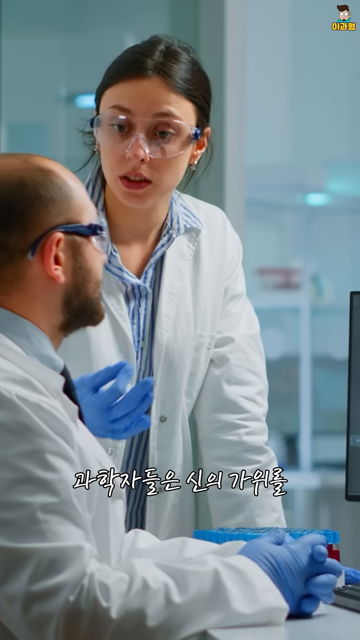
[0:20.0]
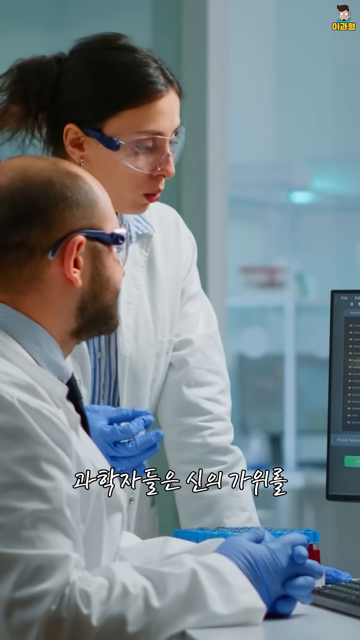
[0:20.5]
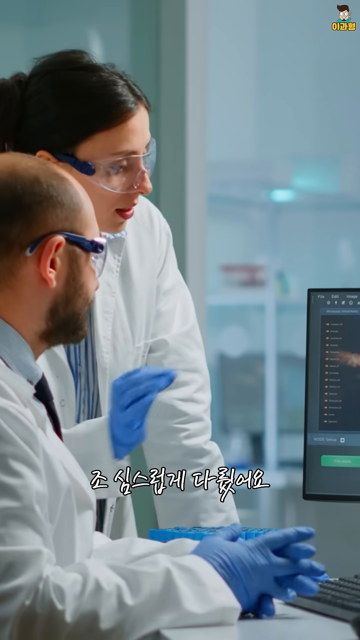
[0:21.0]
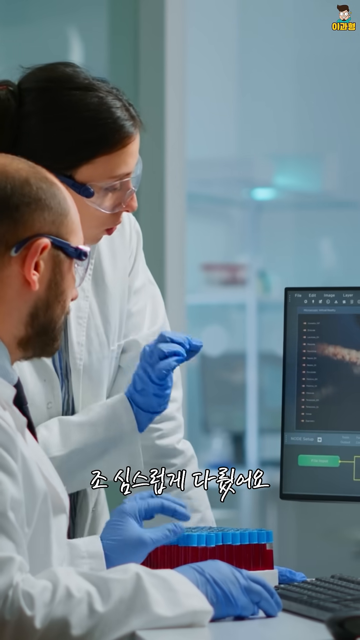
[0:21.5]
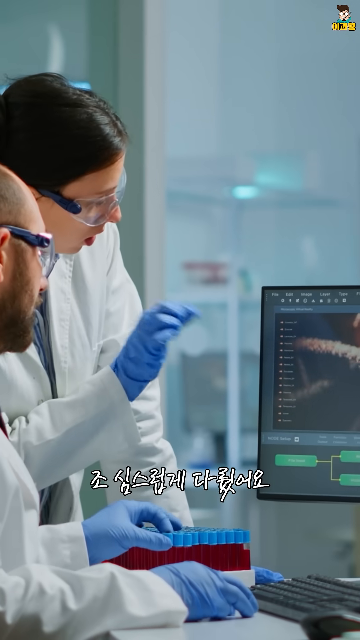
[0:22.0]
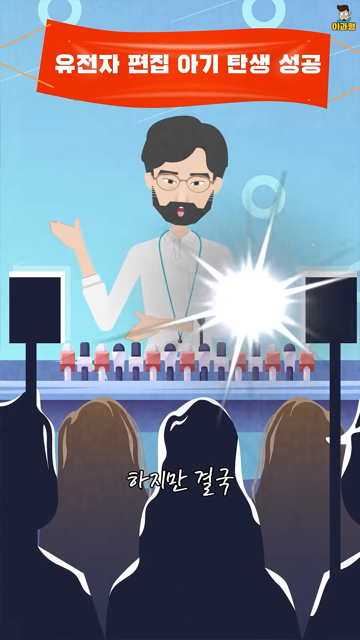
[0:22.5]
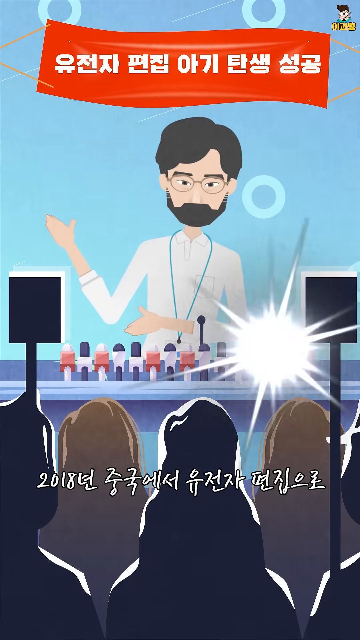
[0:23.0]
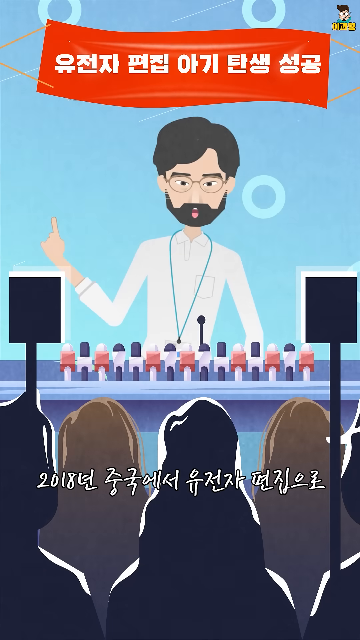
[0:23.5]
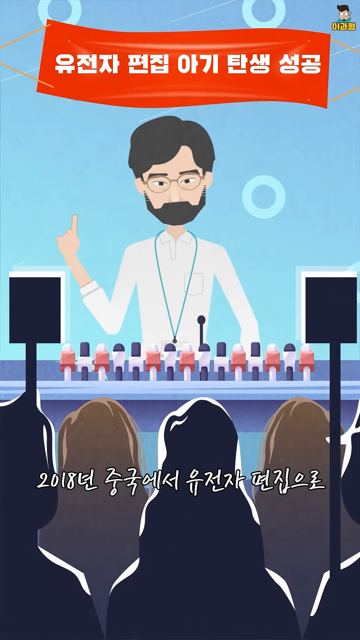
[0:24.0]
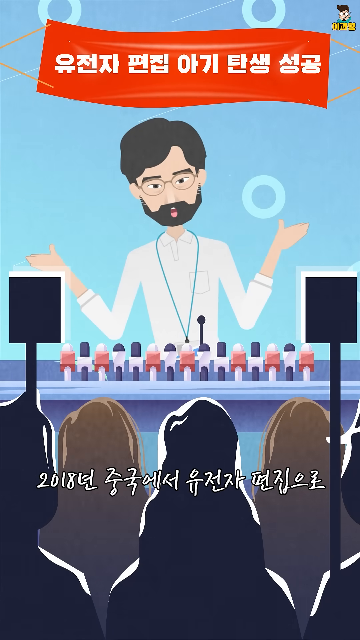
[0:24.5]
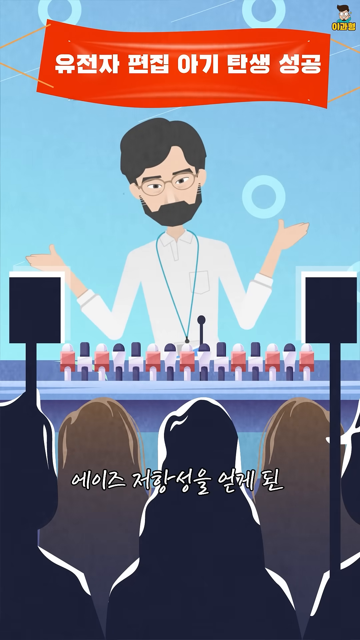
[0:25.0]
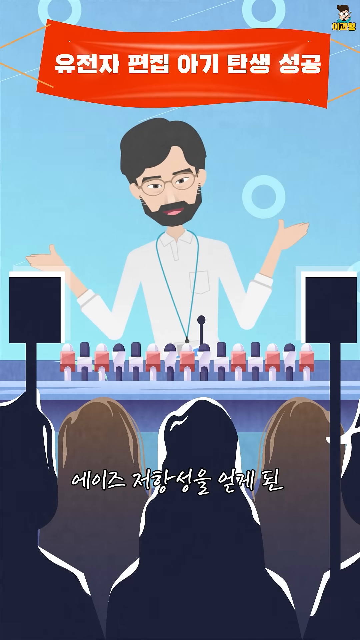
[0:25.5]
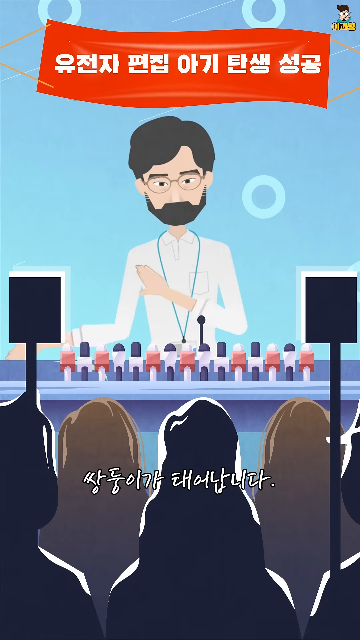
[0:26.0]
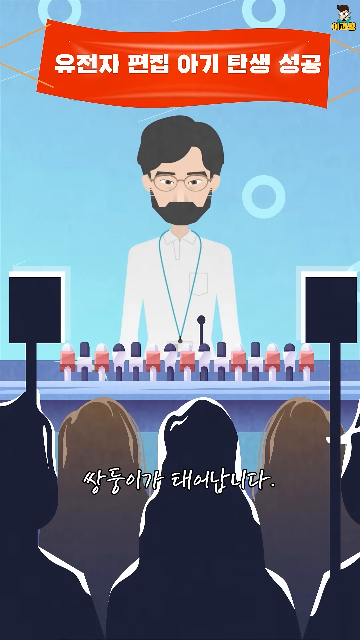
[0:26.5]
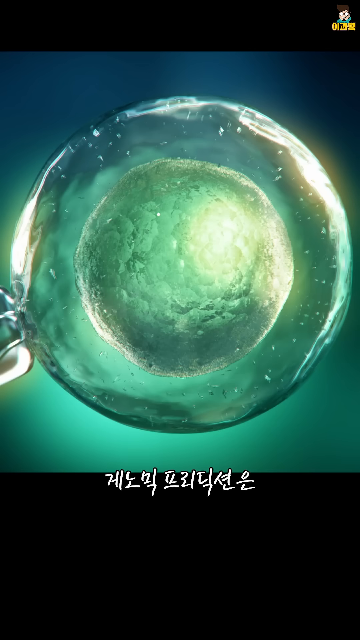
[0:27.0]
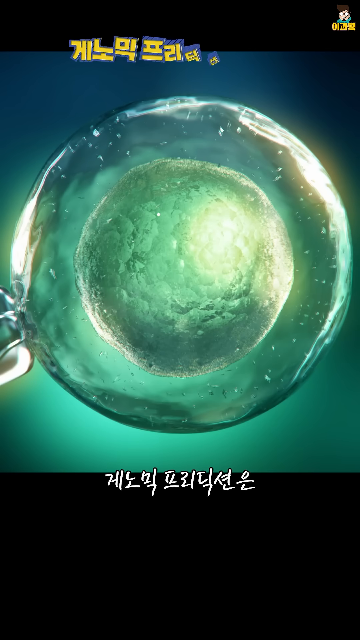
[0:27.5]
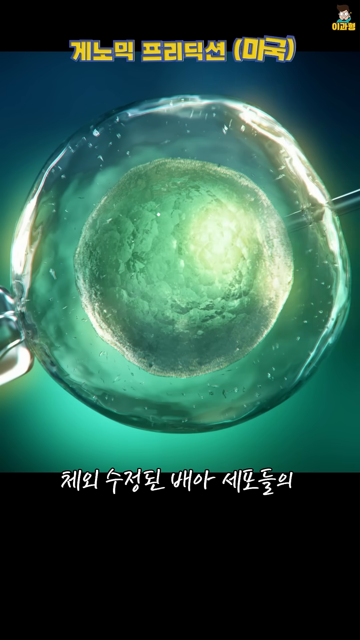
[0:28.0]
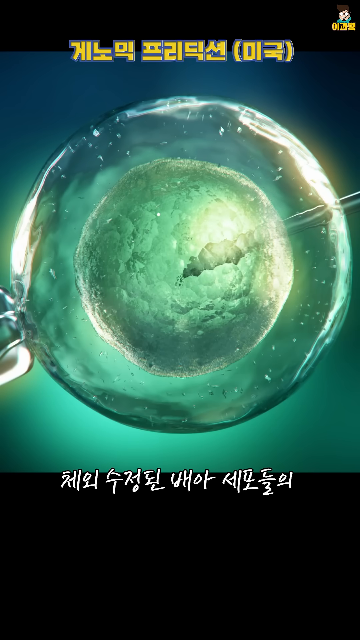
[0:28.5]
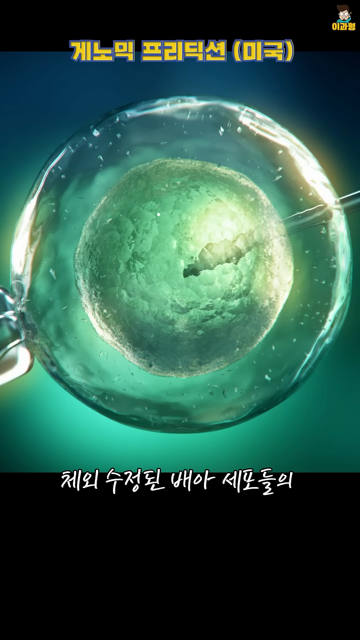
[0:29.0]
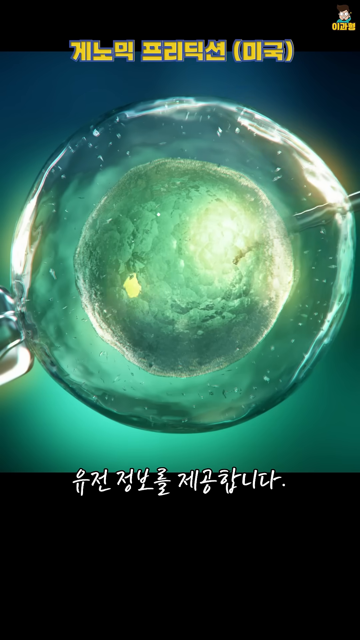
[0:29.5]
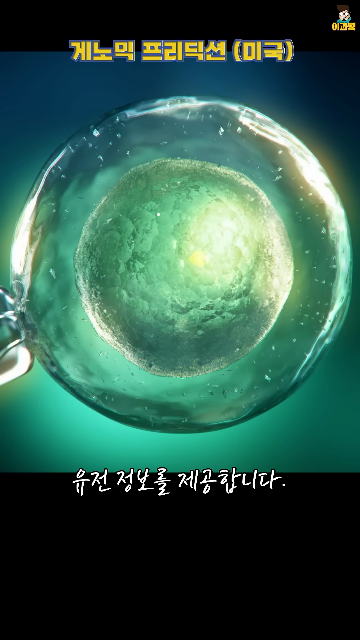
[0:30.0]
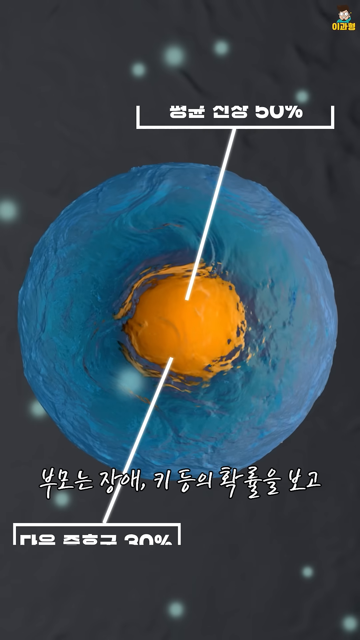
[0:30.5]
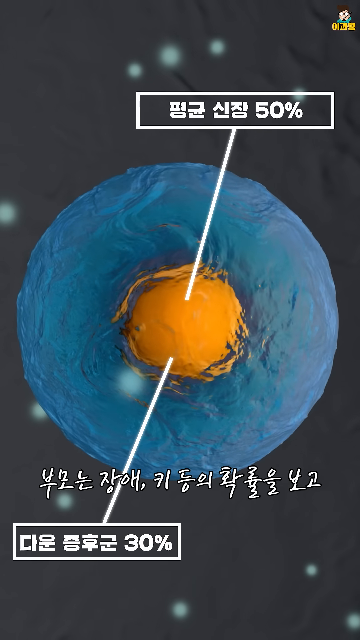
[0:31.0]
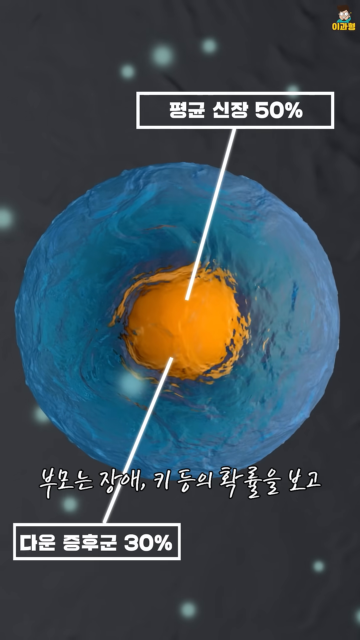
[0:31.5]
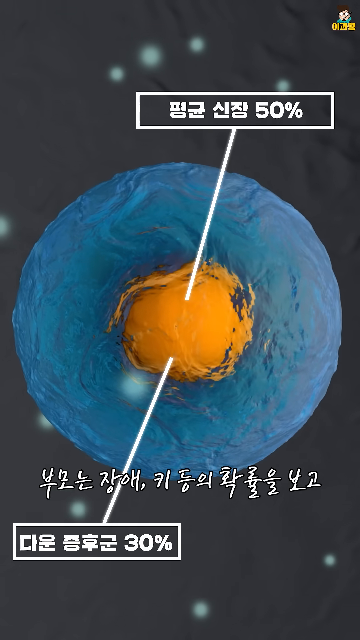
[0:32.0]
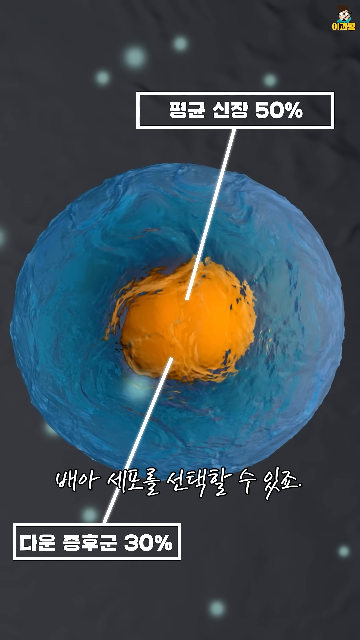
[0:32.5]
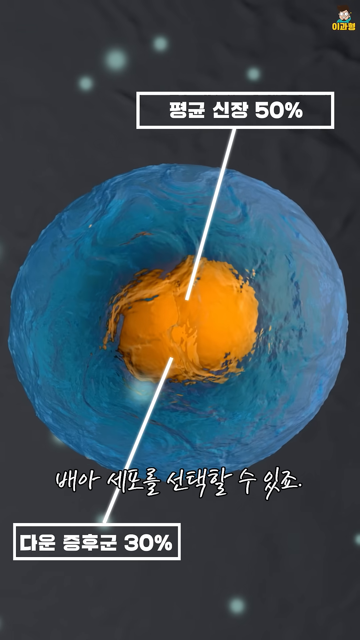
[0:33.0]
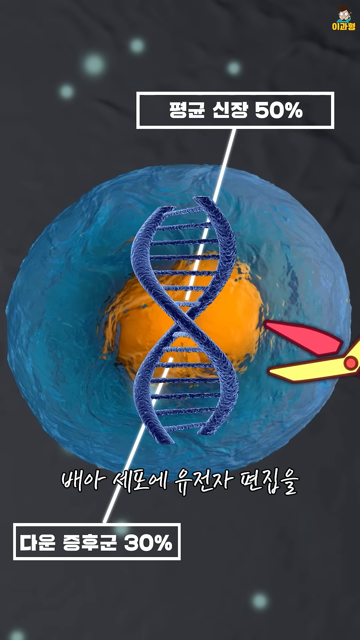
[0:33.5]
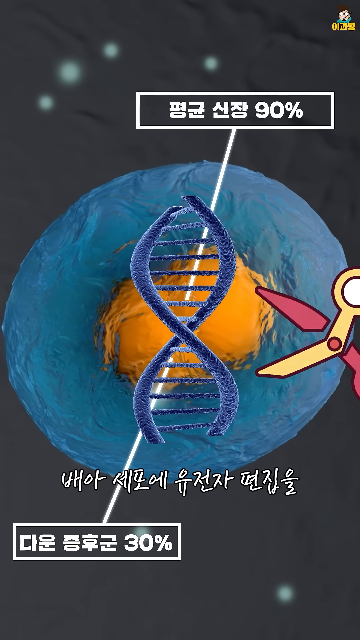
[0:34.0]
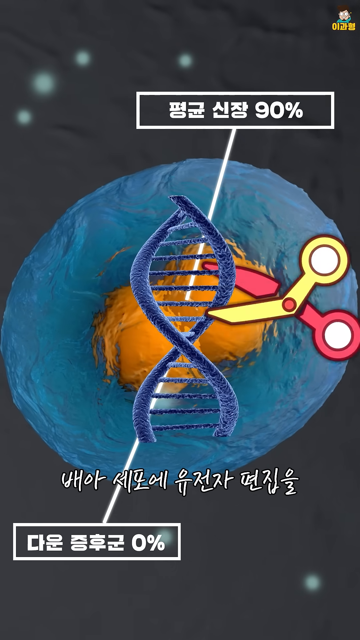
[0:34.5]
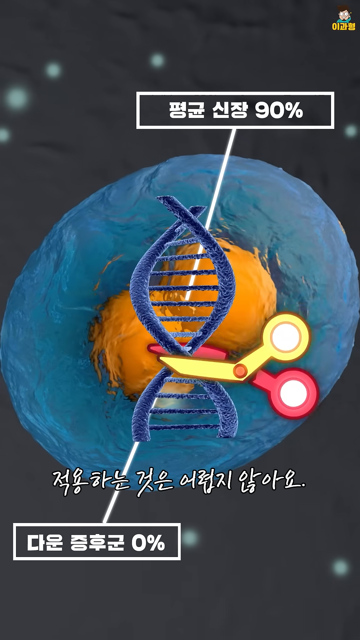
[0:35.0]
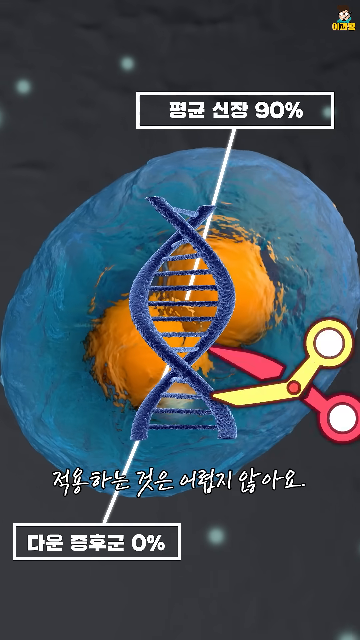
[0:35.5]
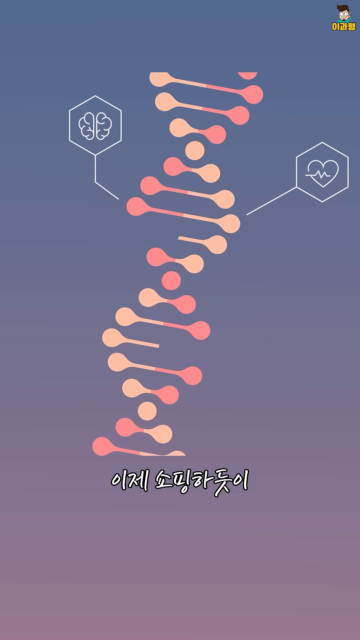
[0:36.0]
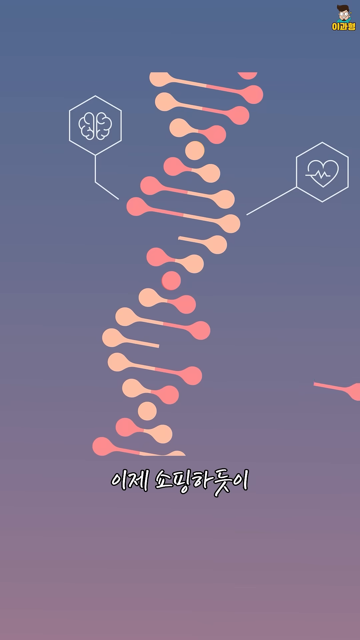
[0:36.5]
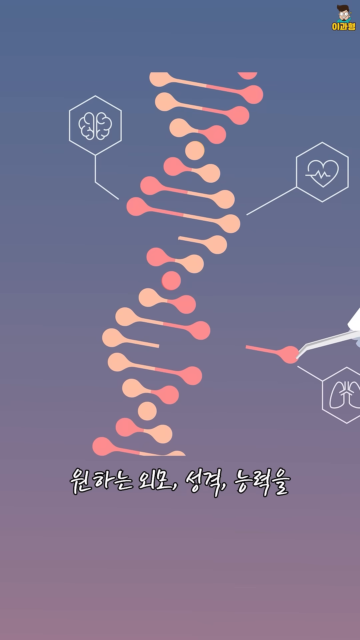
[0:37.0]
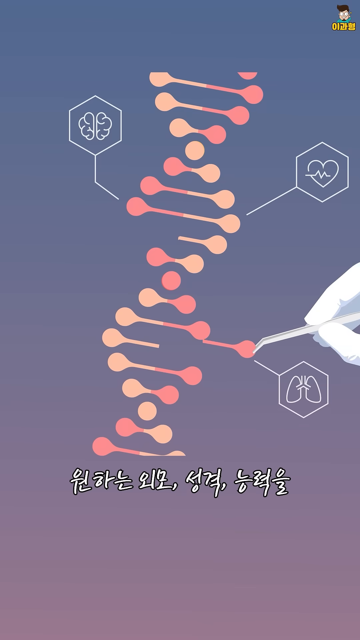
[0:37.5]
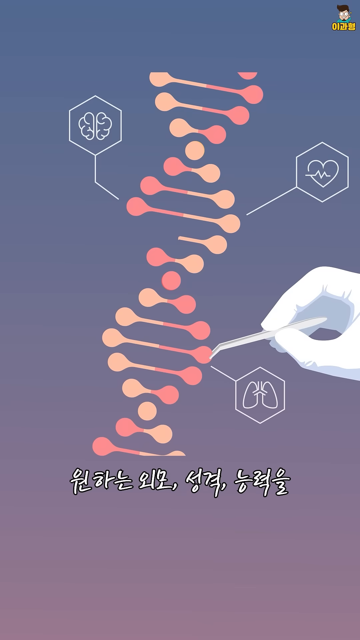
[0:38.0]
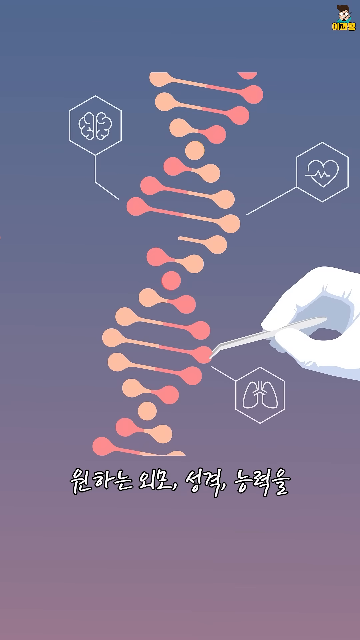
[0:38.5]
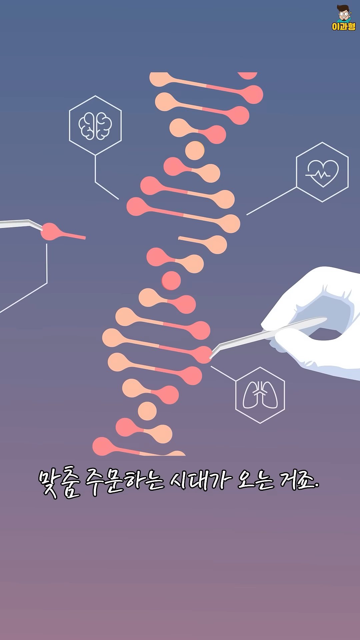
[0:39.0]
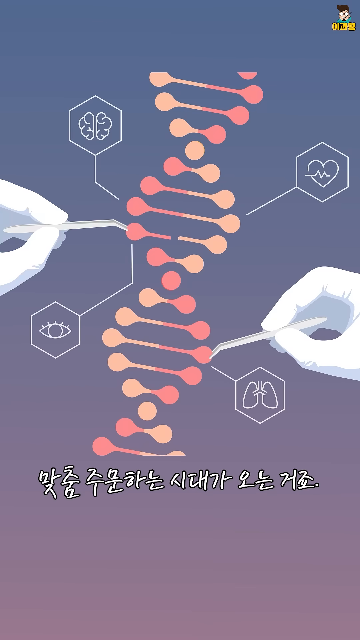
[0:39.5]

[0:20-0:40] The video shifts to real people: a man and a woman who are talking and look like scientists. They wear safety glasses and blue gloves and are looking at a computer. It then moves to another illustration, this one of another scientist who appears to be speaking in front of a crowd. The subtitles are in English, but there is a lot of writing on the video in either Chinese or Japanese. In the illustration with the man there are camera clicks. The video then shows a couple of different shots of what looks like cells, DNA strands, and scissors.